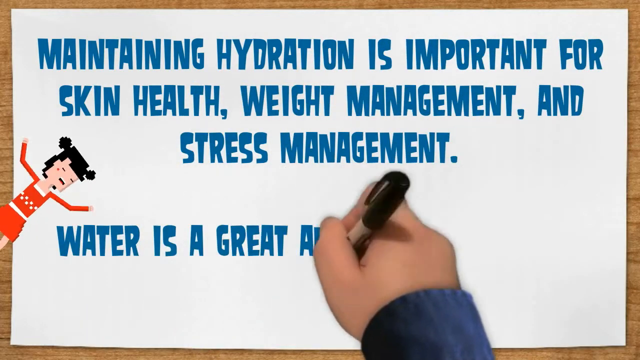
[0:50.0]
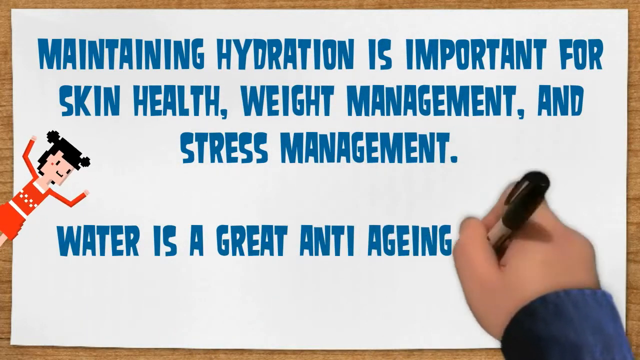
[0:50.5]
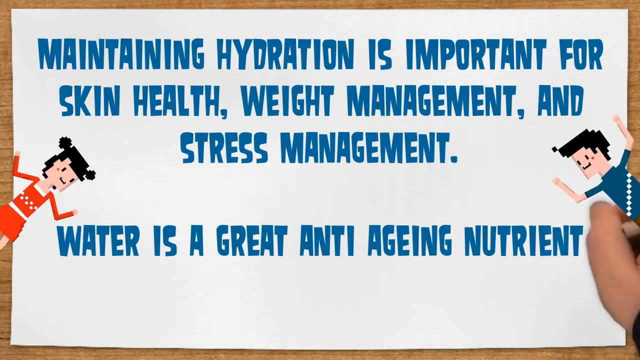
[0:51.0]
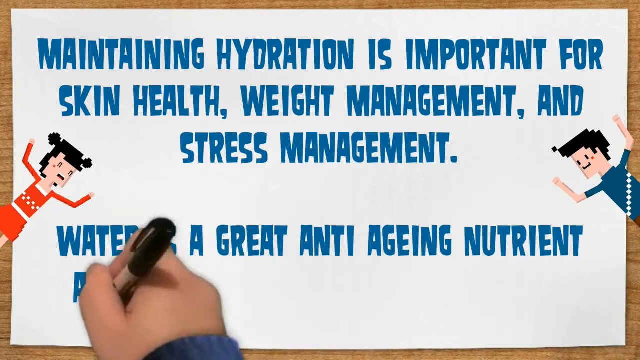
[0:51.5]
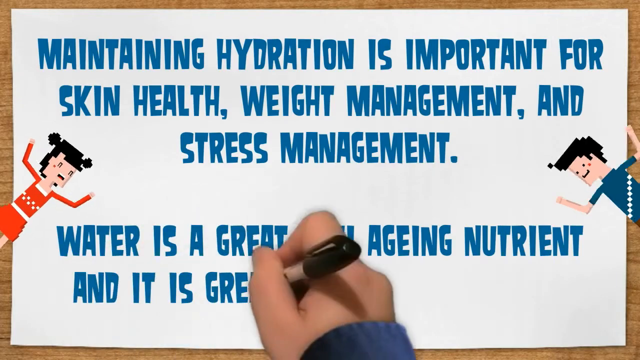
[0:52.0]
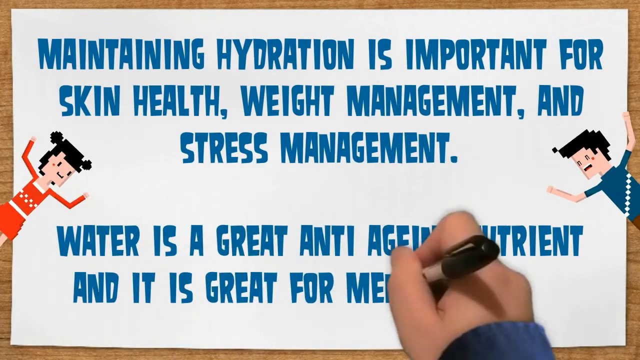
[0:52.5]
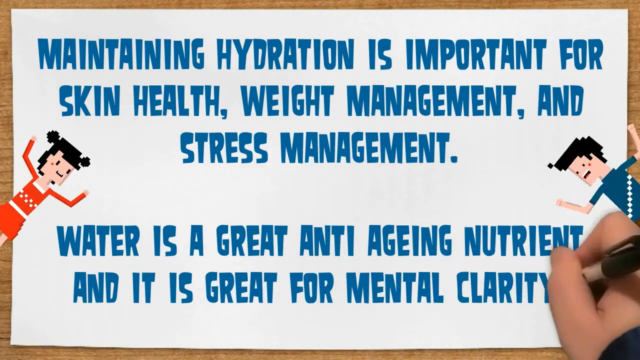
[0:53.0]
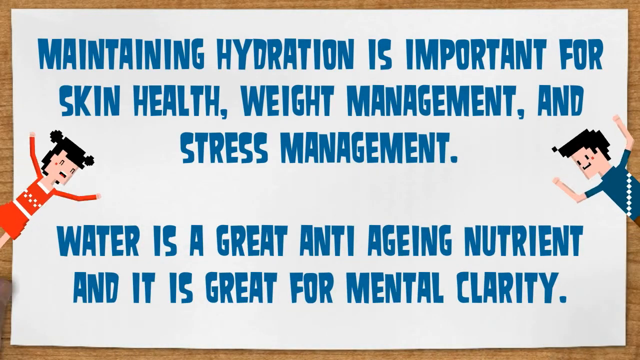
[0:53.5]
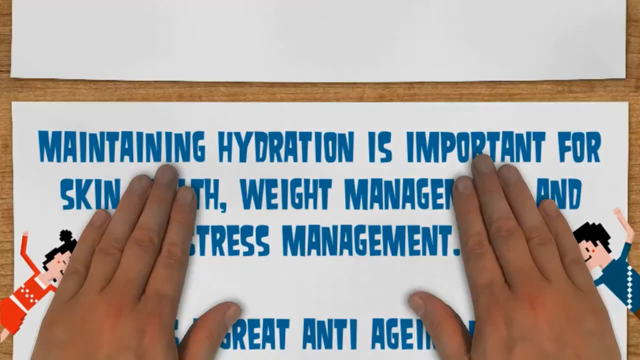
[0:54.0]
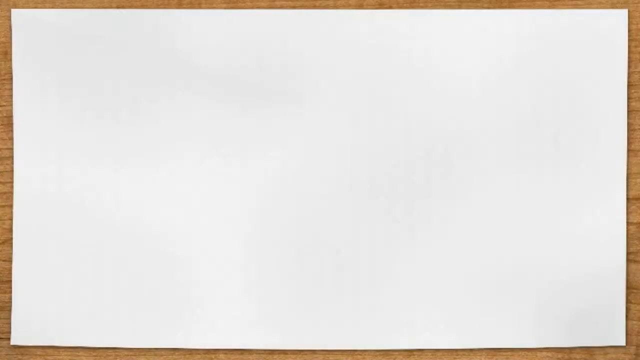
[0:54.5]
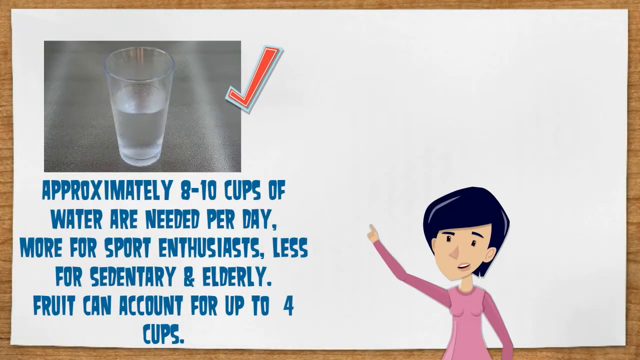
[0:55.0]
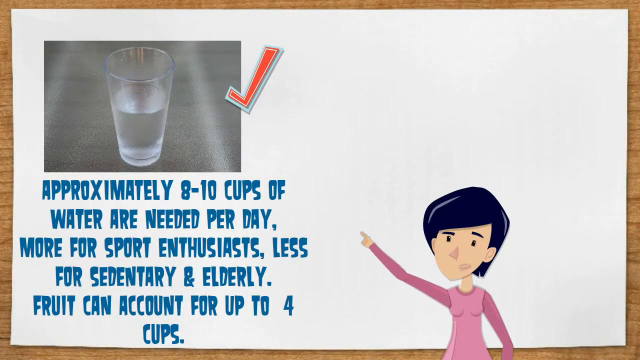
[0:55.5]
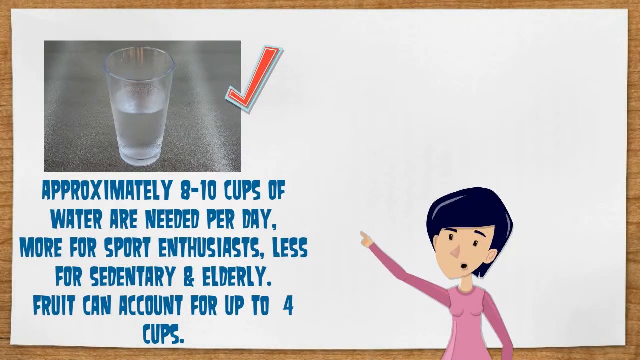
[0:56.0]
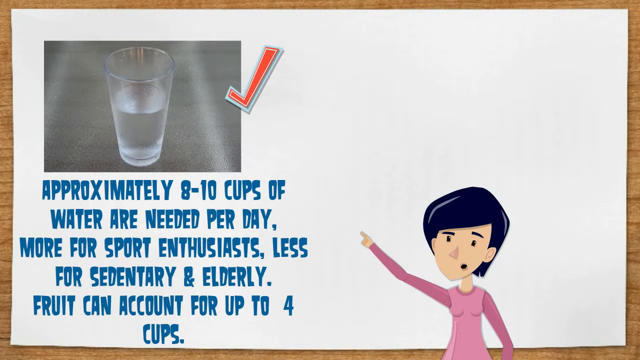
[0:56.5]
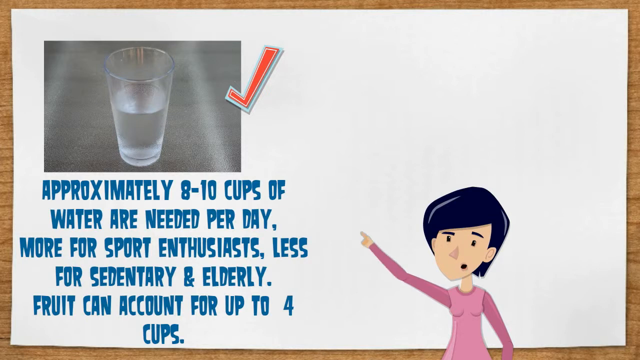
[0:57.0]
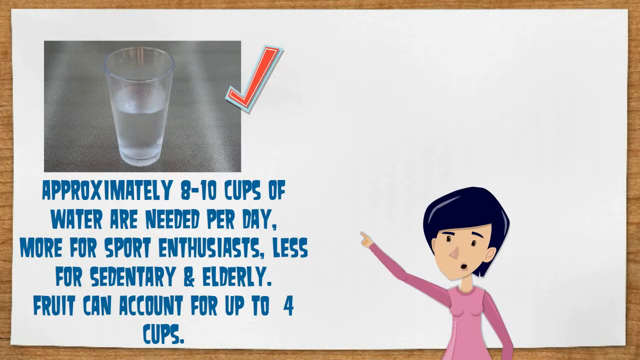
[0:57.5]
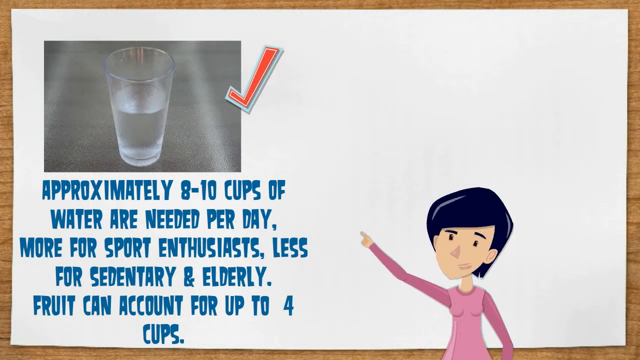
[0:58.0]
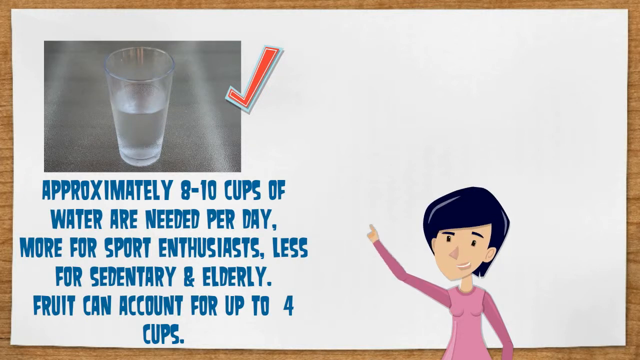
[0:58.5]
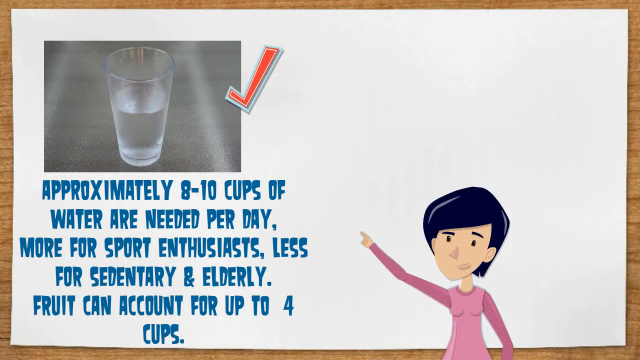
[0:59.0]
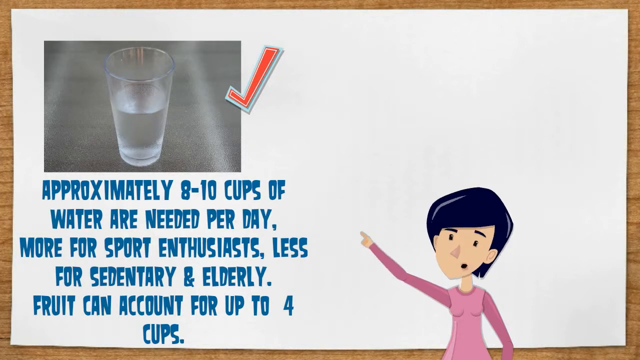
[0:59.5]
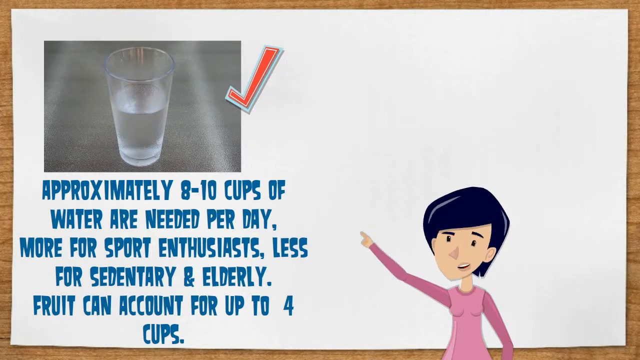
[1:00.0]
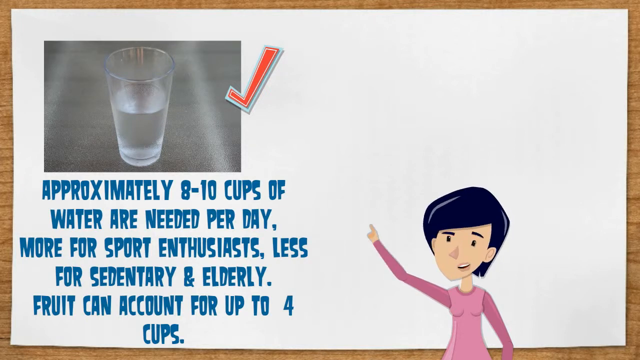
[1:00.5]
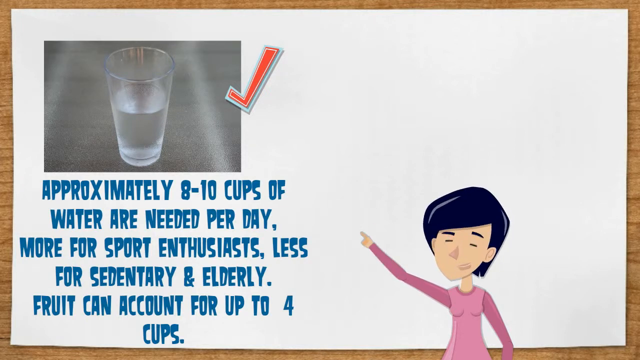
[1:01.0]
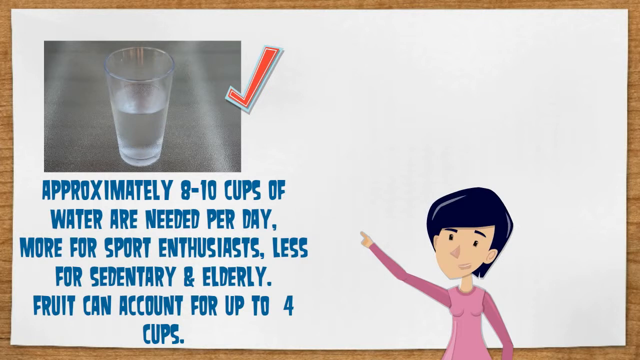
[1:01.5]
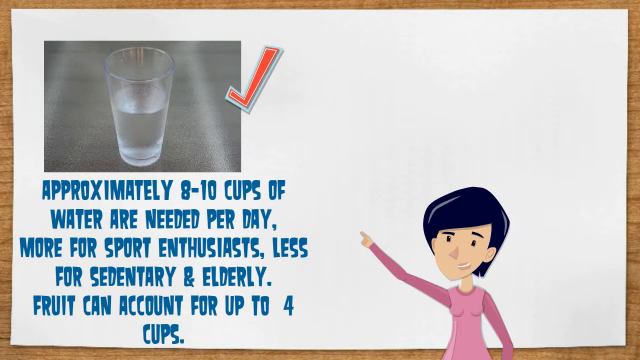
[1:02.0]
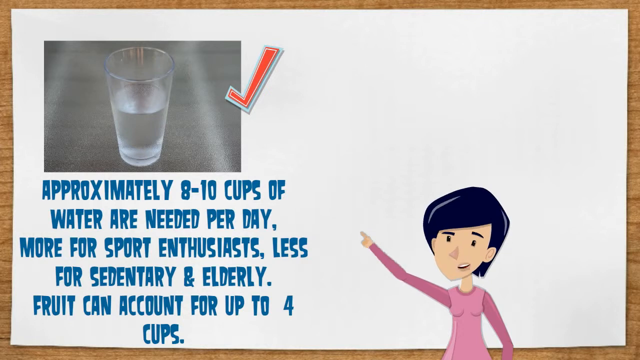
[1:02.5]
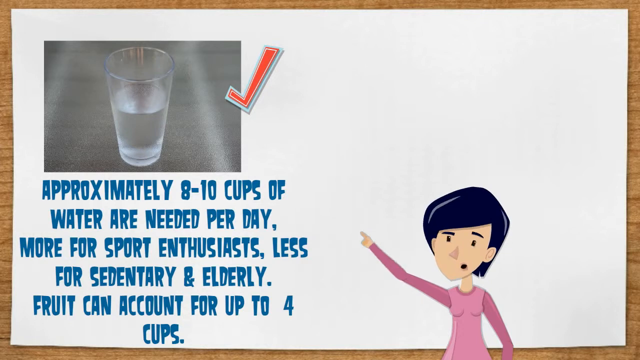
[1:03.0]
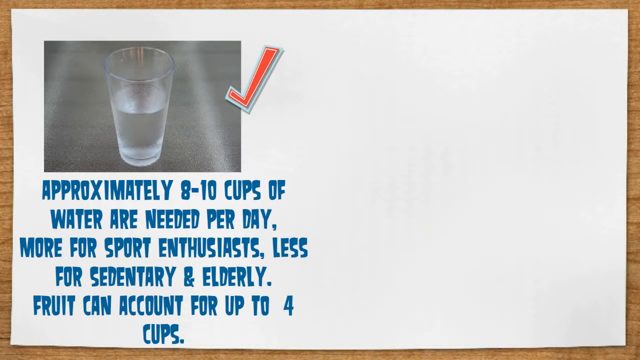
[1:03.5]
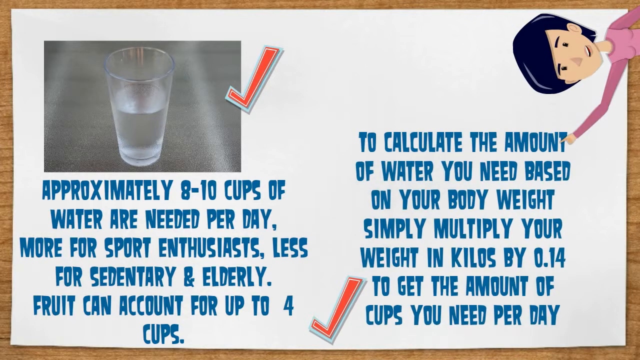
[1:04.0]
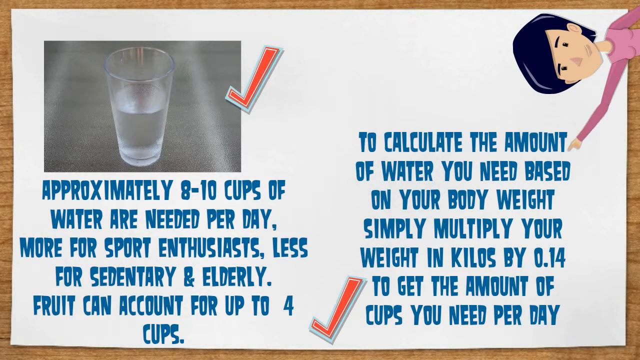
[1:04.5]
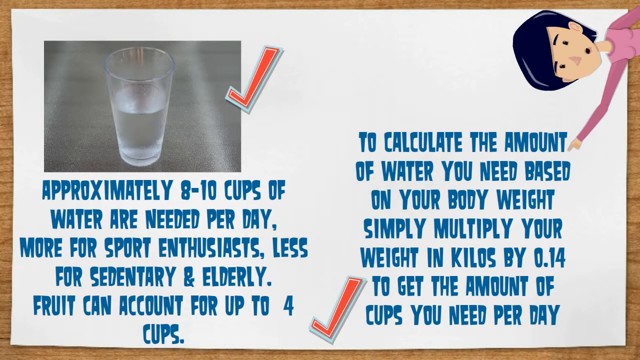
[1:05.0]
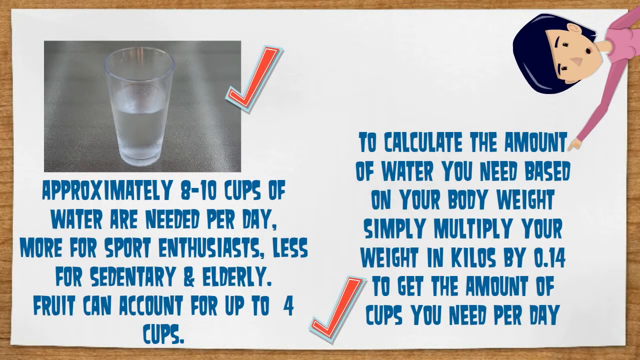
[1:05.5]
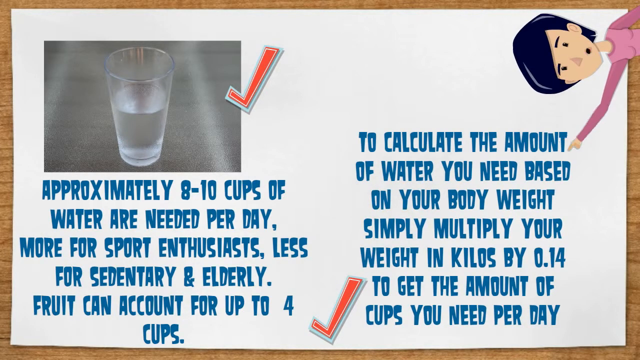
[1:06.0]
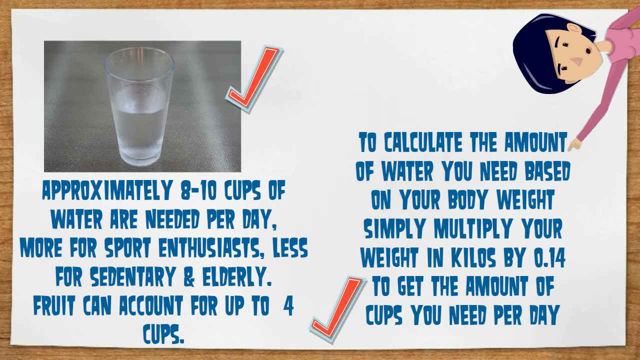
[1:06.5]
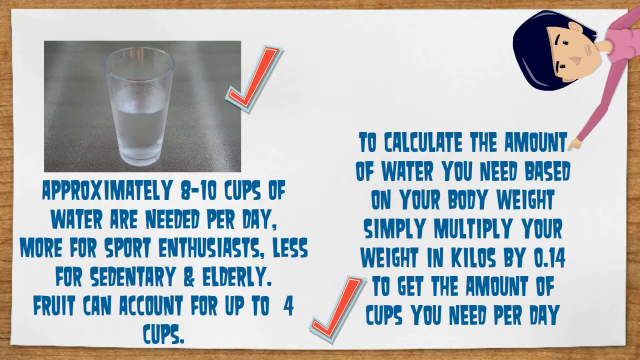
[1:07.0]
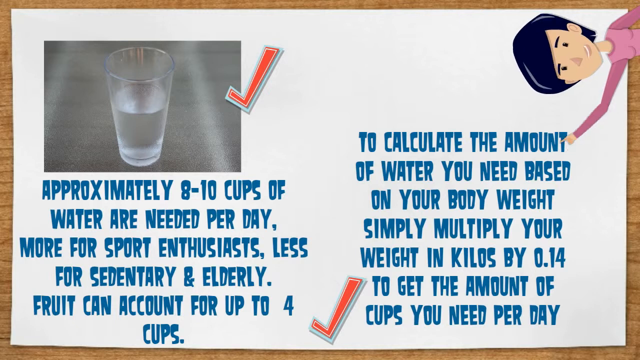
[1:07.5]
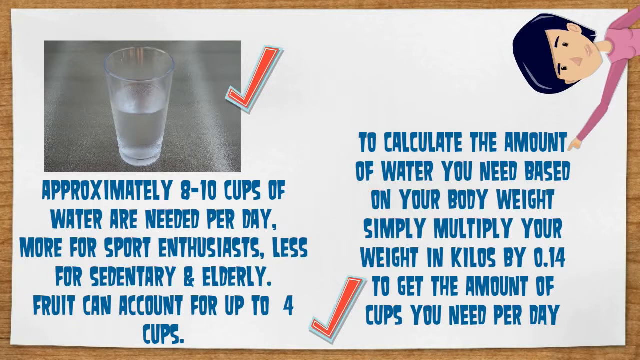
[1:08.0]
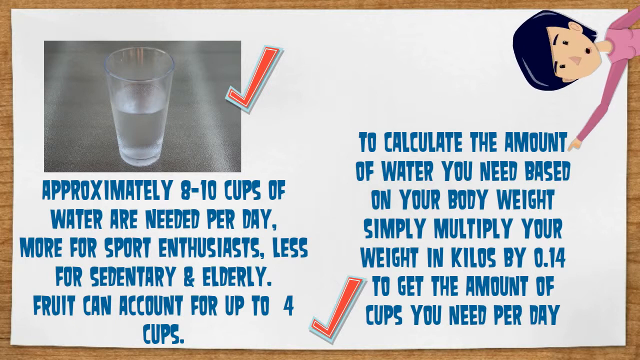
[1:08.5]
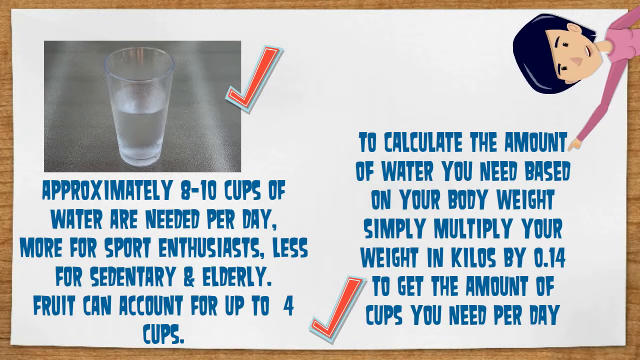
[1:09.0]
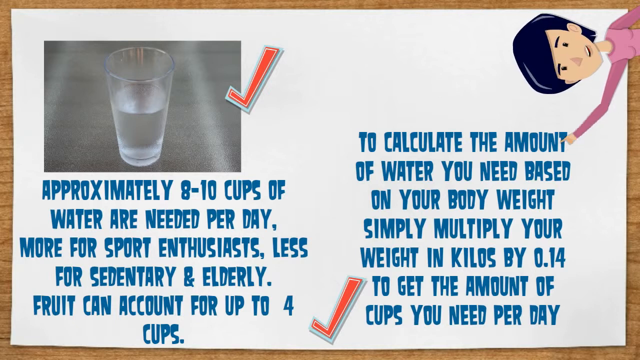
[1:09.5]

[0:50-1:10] The hand appears to write text reading "maintaining hydration is important for skin health, weight management, and stress management. Water is a great anti-aging nutrient and is great for mental clarity." Another 8-bit figure, a man with black hair in a blue top, appears on the right side of the image, doing the same cheering motion as the girl. The hands appear in the middle of the screen and seem to pull the paper down, switching to a fresh sheet. An image of a glass of water appears on the top left of this sheet, and directly beneath it blue text reads "approximately eight to 10 cups of water are needed per day, more for sports enthusiasts, less for sedentary and elderly adults. Fruit can account for up to four cups." A red tick is next to the glass of water. A cartoon woman with blue hair and a pink shirt points her right arm up to the fact, her head moving and her eyes and mouth moving as if she is talking. She then moves down to the bottom of the screen until she is no longer visible. Another fact appears reading "to calculate the amount of water you need based on your body weight, simply multiply your weight in kilos by 0.4 to get the amount of cups you need per day." The woman reappears at the top right of the screen at a sideways angle, the top of her head pointing to the left of the image, pointing her arm while her mouth and head move as if talking.